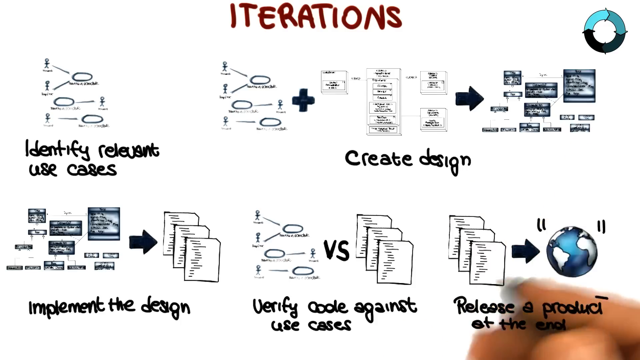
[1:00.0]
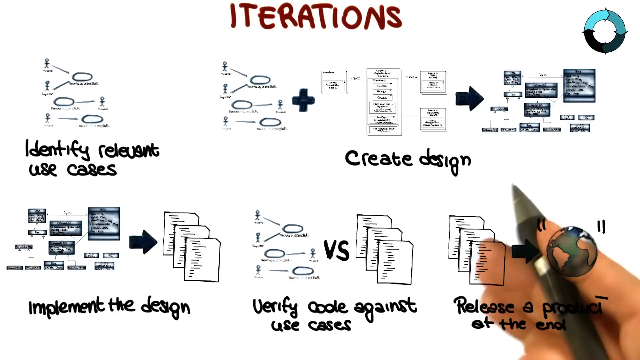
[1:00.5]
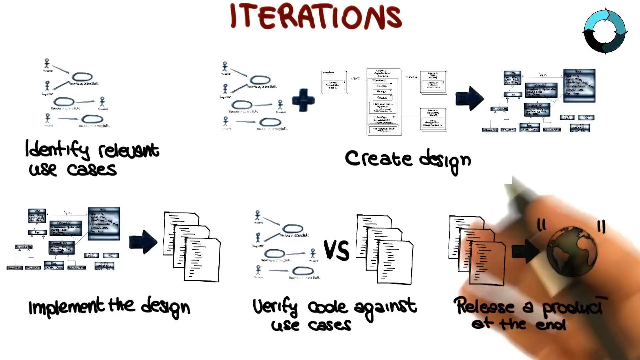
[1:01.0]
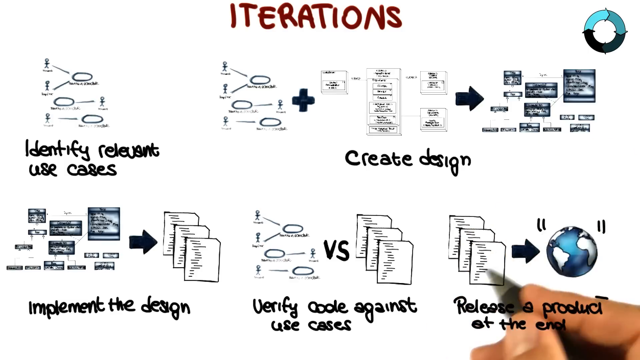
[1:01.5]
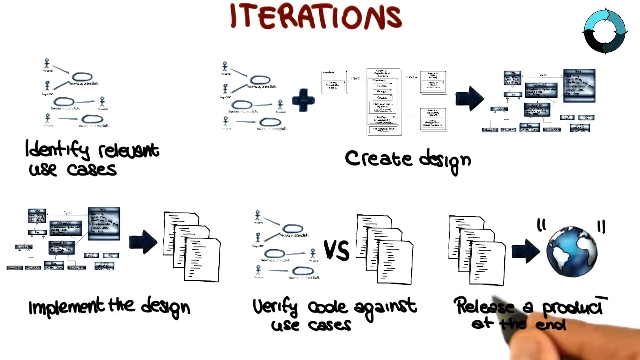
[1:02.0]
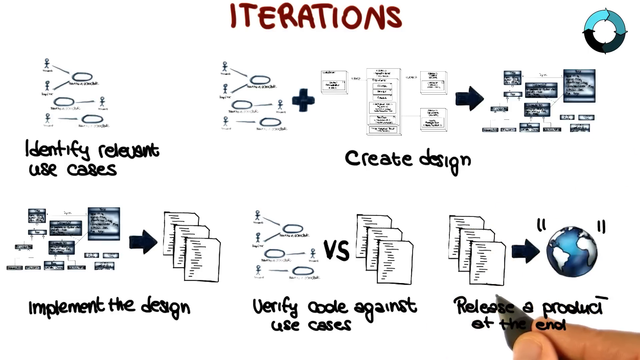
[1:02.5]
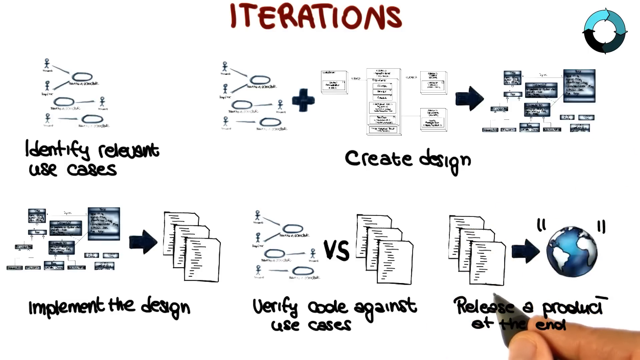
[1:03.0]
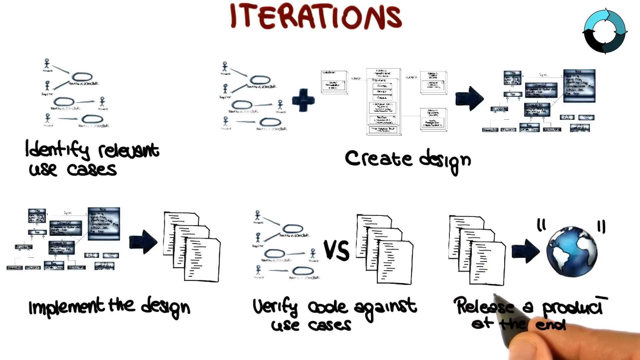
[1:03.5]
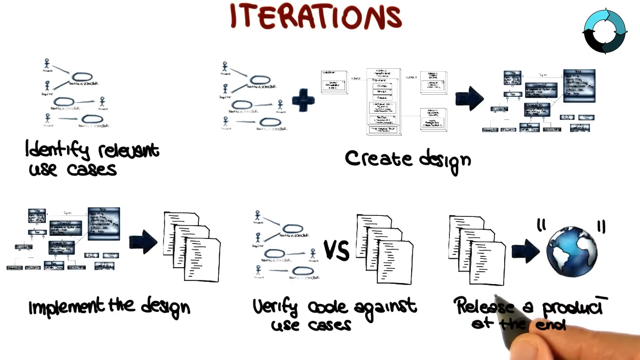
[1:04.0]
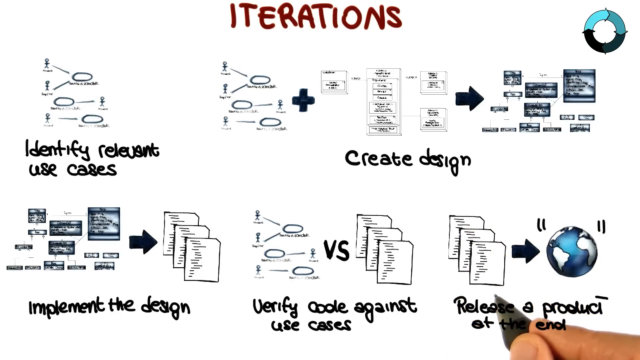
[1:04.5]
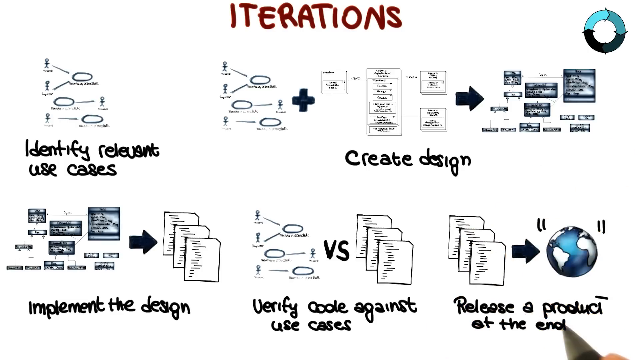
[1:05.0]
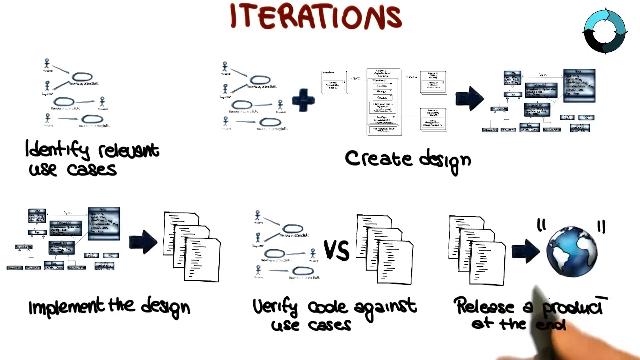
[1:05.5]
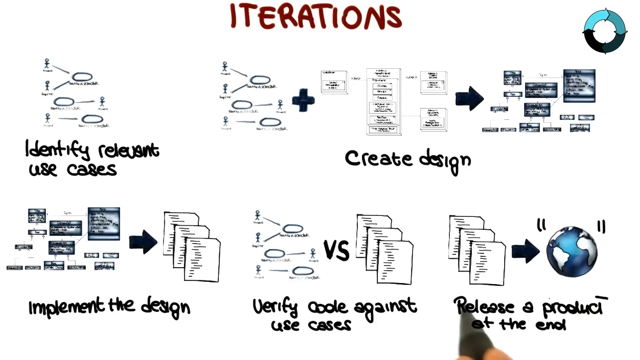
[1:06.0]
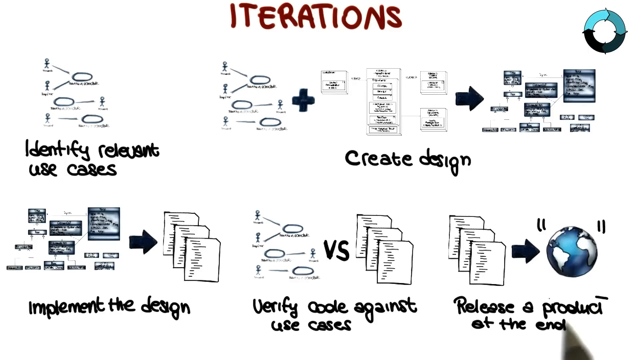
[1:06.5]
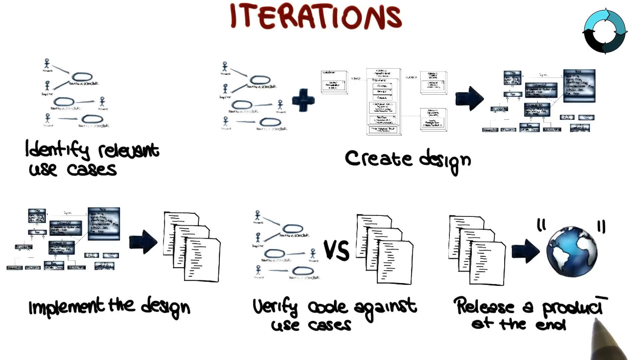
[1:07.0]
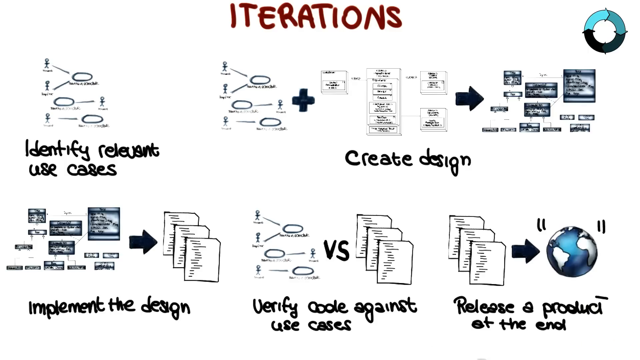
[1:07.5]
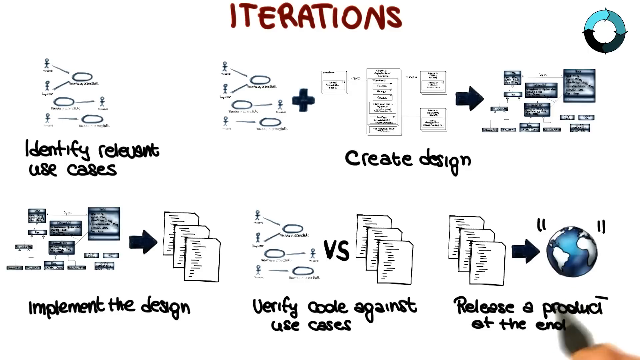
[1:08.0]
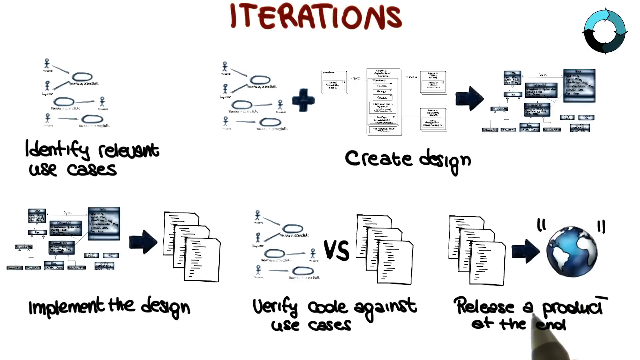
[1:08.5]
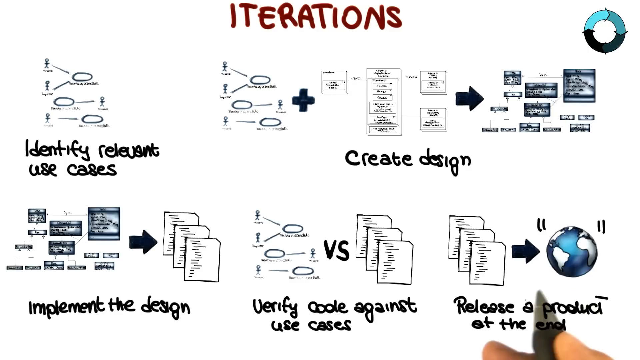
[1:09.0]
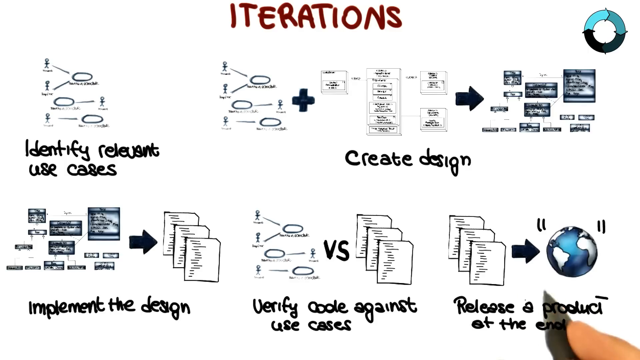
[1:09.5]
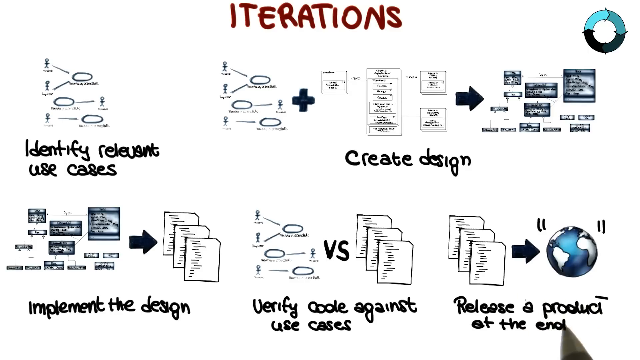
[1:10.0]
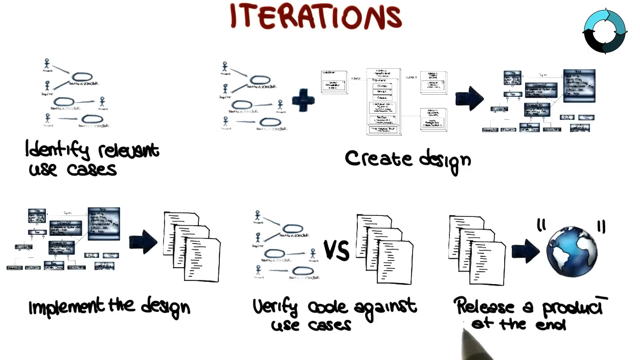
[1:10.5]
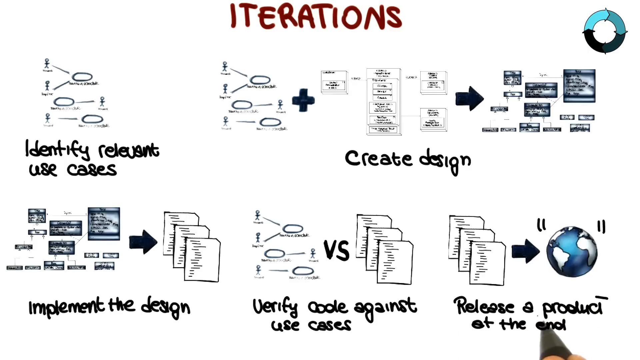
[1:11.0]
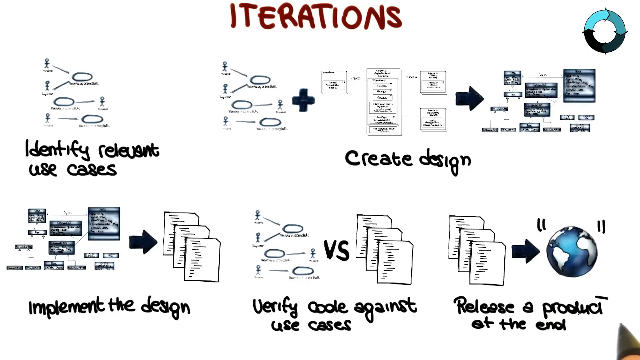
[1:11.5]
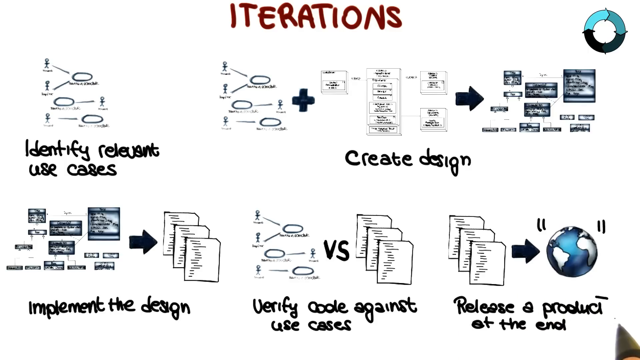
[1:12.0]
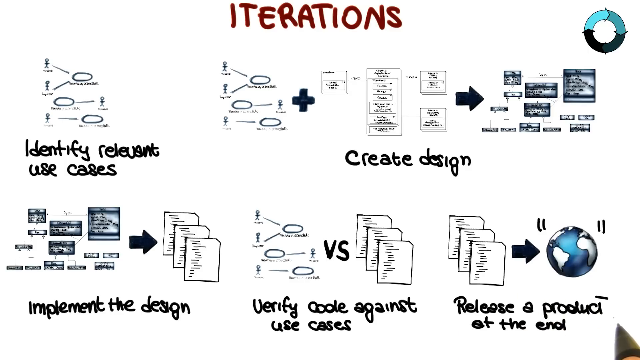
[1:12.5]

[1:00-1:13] The completed iteration flow is on screen. The hand with the pen hovers around the final image, the one that appeared most recently, making circling motions toward and away from it, and the video ends after the hand has motioned around this final image. The images are mostly black and white, with some shades of blue in some of them. They are small and very hard to make out, but they include things like decision trees, drop-down menus, different text boxes, documents and files like pieces of paper that look like files, and a globe, or the planet Earth, at the end.